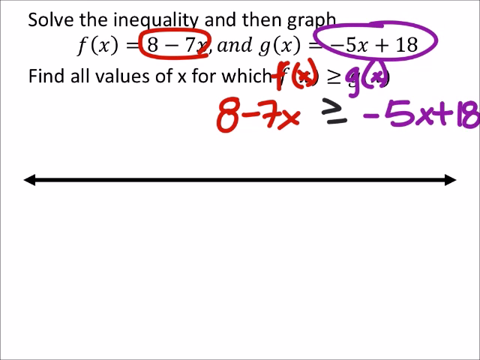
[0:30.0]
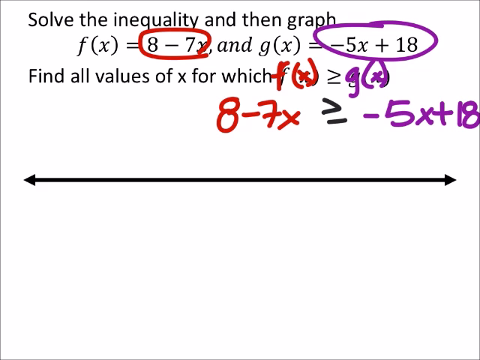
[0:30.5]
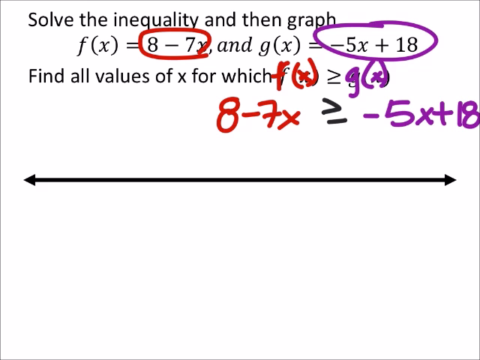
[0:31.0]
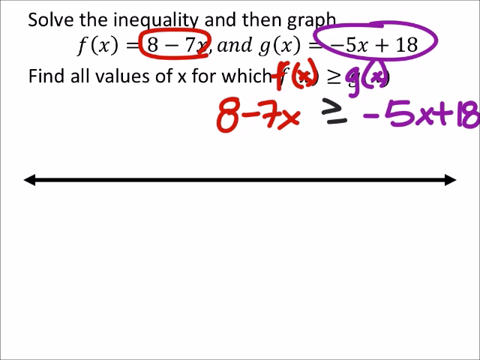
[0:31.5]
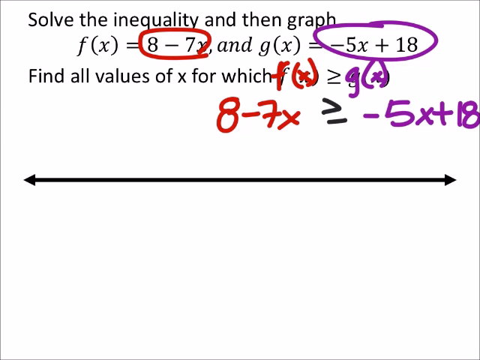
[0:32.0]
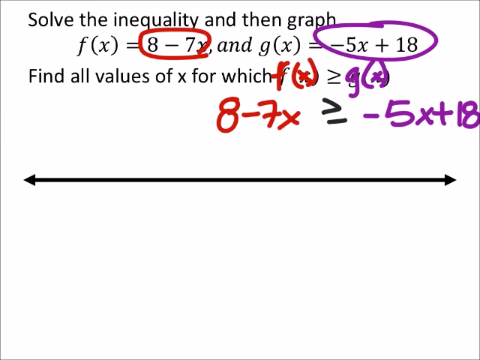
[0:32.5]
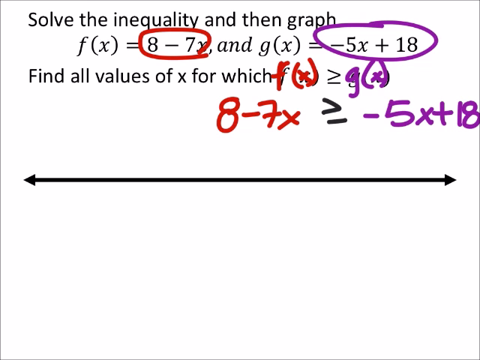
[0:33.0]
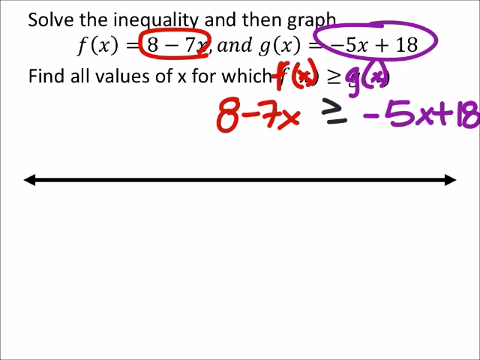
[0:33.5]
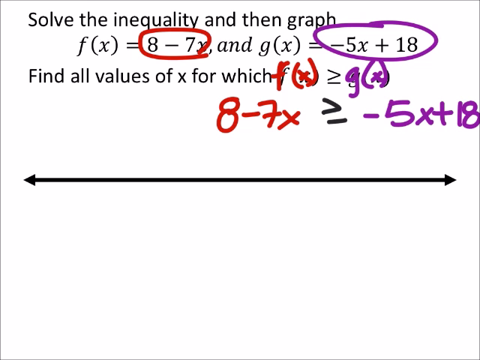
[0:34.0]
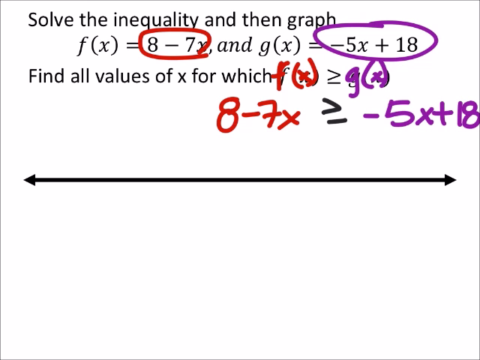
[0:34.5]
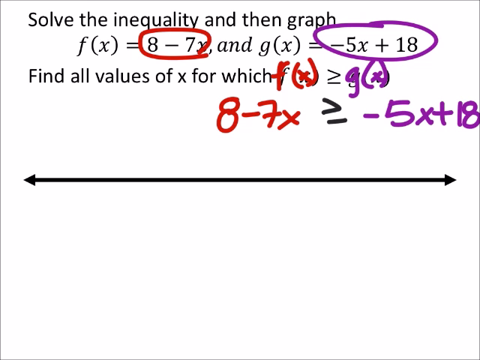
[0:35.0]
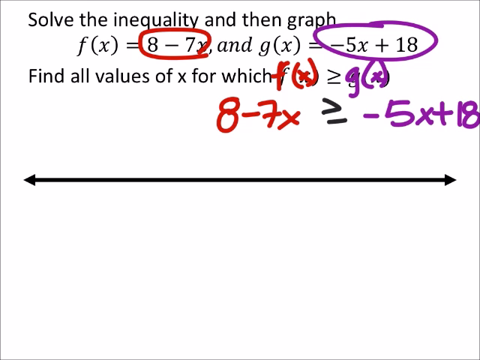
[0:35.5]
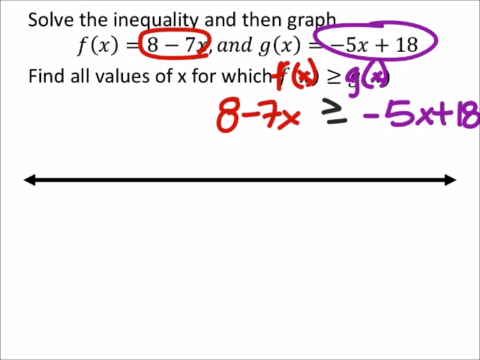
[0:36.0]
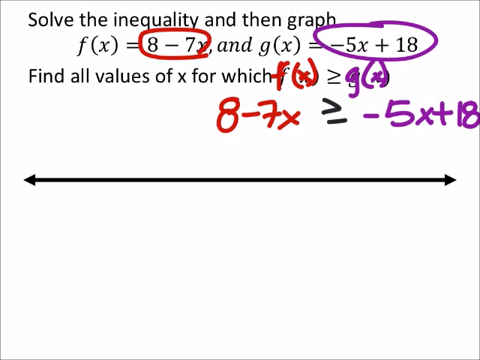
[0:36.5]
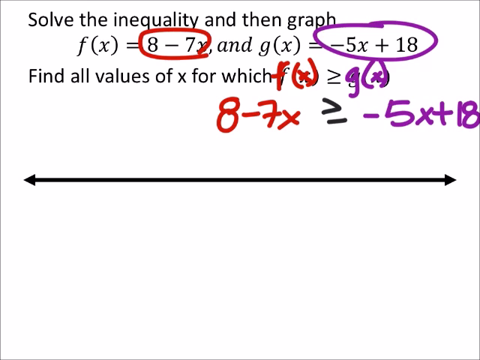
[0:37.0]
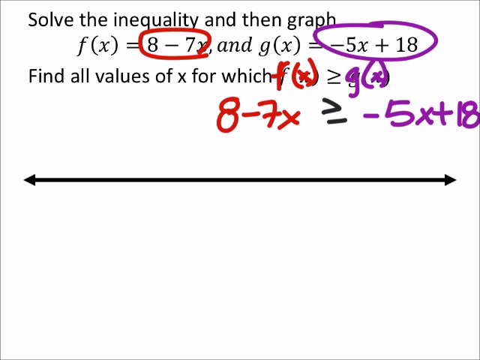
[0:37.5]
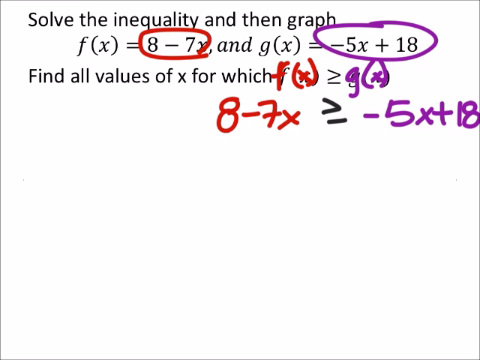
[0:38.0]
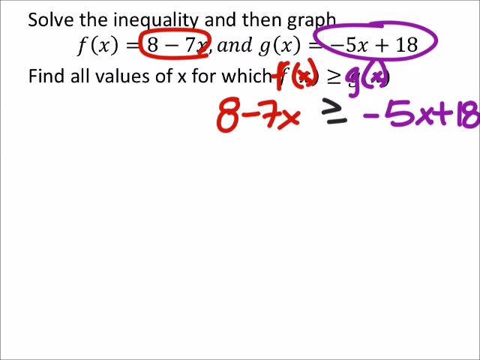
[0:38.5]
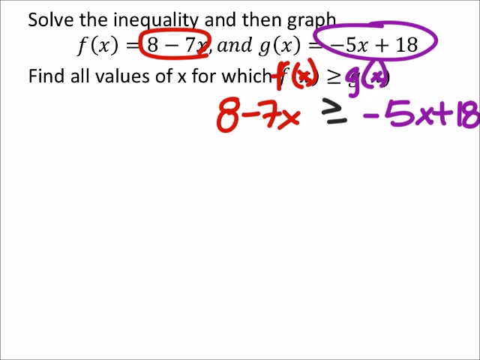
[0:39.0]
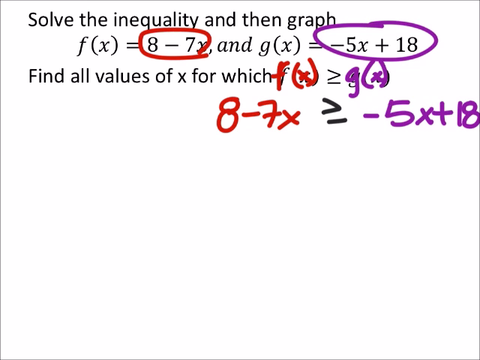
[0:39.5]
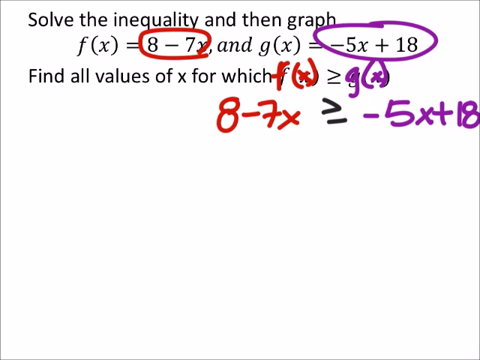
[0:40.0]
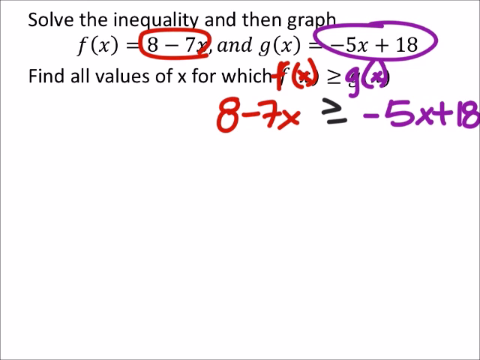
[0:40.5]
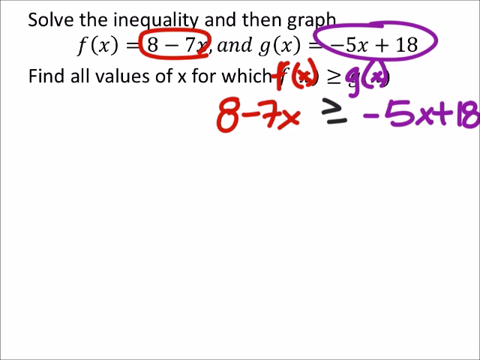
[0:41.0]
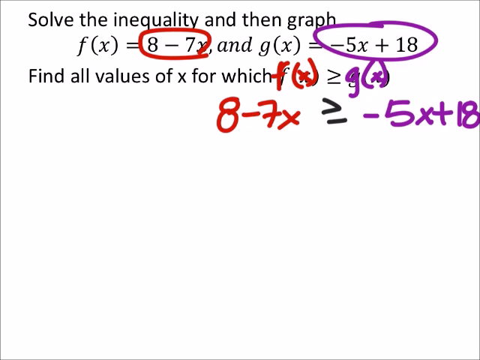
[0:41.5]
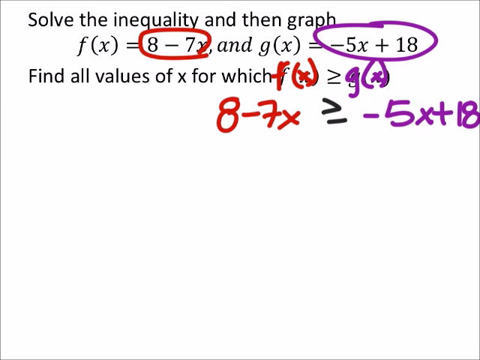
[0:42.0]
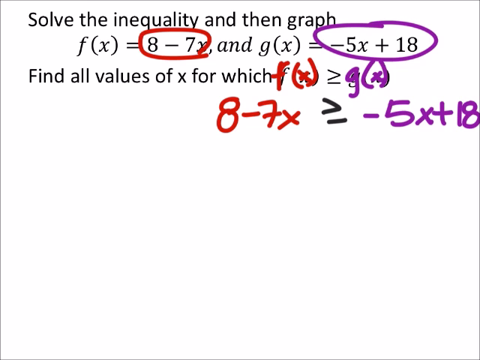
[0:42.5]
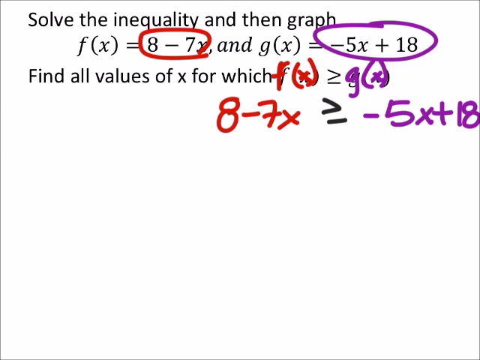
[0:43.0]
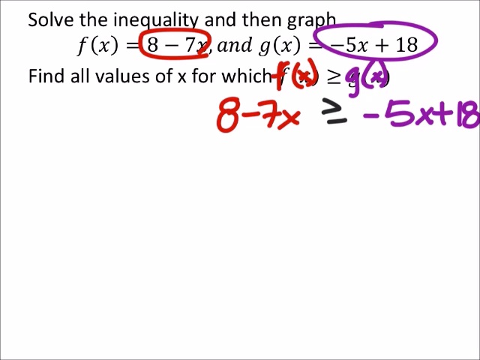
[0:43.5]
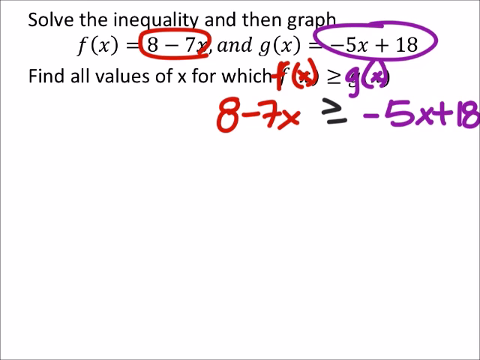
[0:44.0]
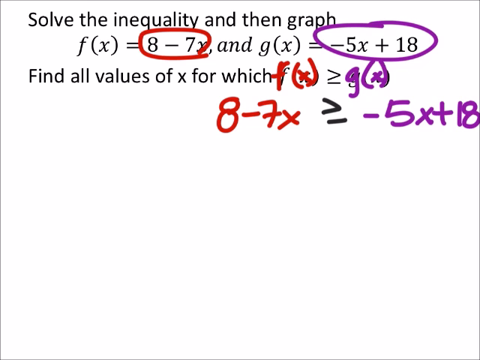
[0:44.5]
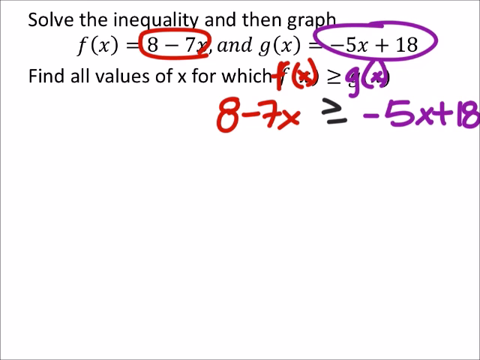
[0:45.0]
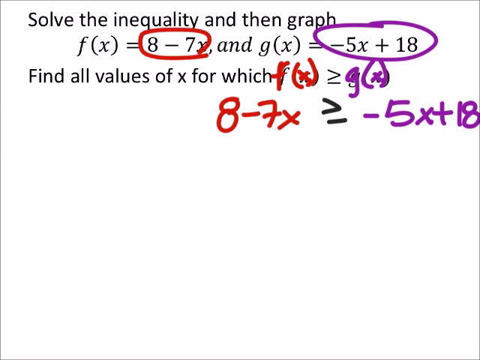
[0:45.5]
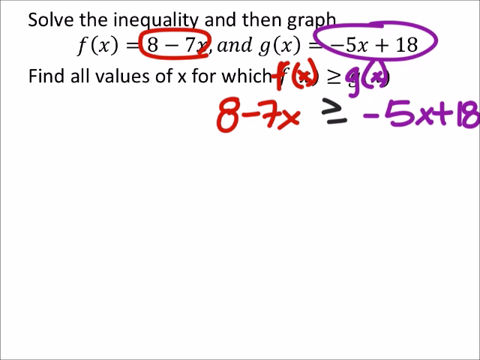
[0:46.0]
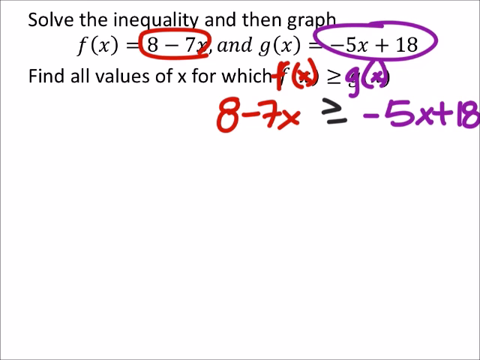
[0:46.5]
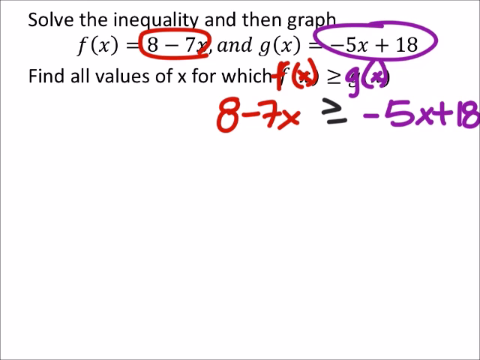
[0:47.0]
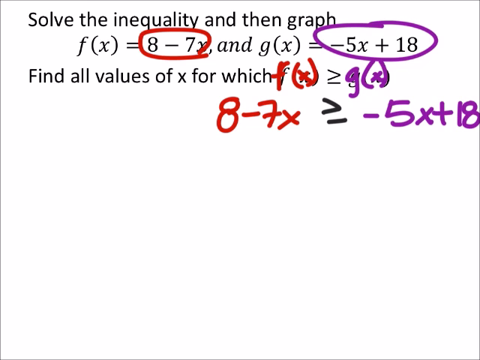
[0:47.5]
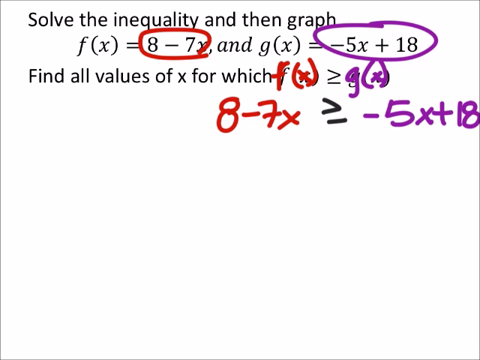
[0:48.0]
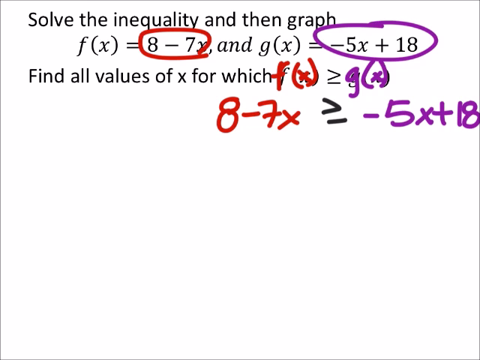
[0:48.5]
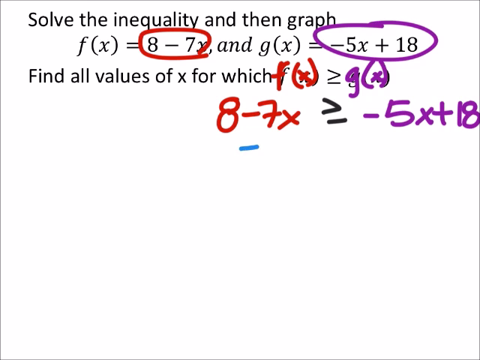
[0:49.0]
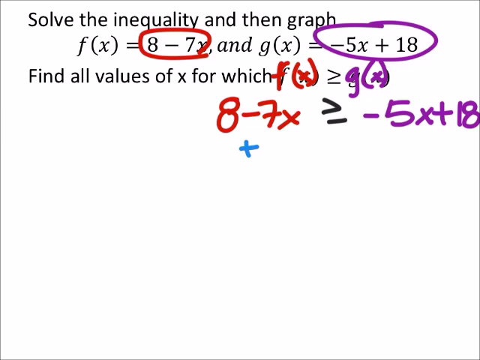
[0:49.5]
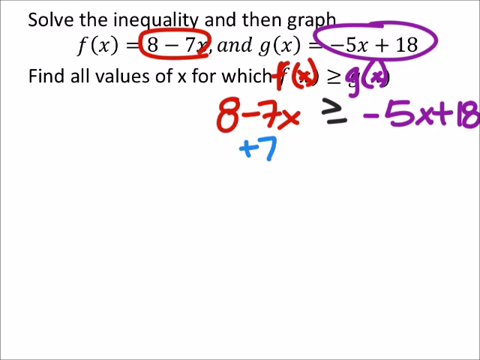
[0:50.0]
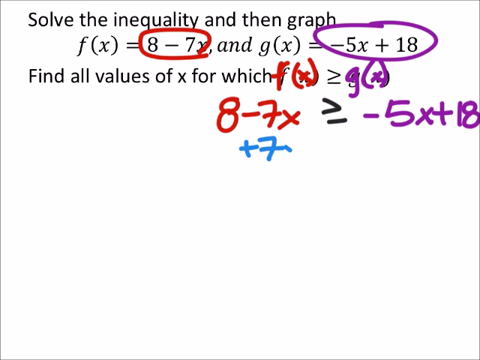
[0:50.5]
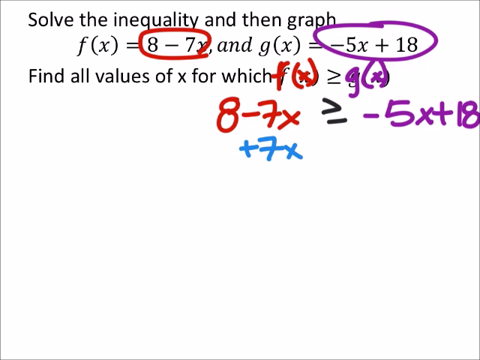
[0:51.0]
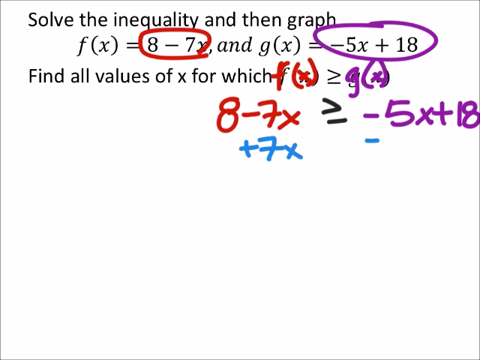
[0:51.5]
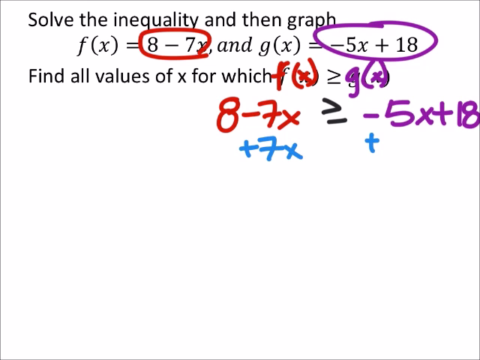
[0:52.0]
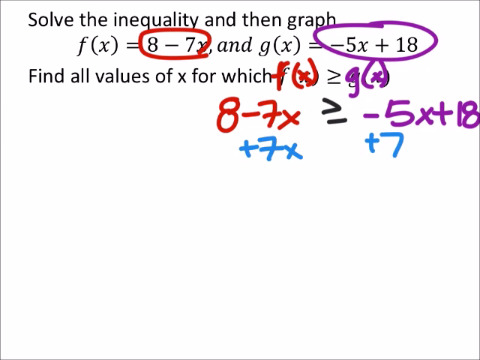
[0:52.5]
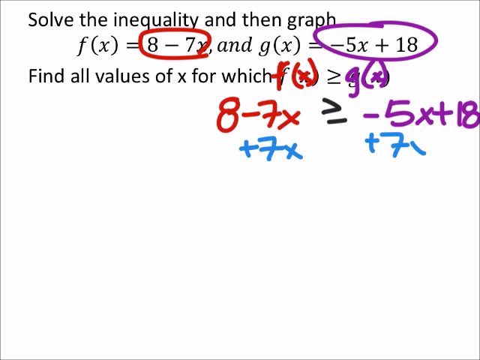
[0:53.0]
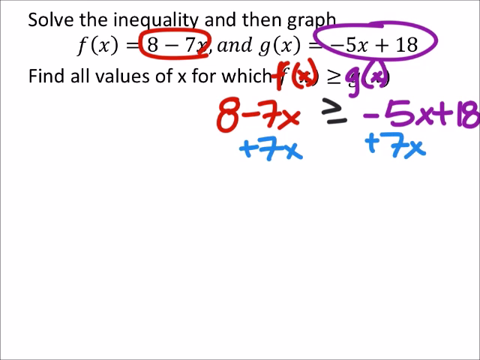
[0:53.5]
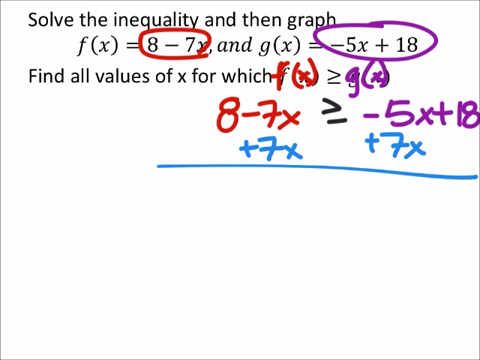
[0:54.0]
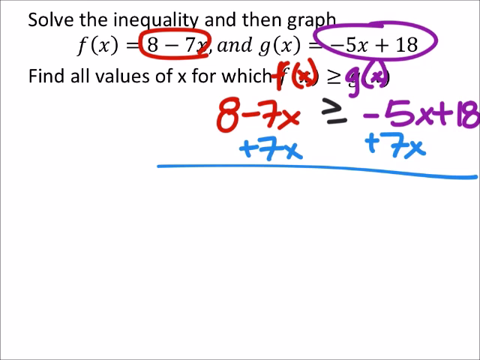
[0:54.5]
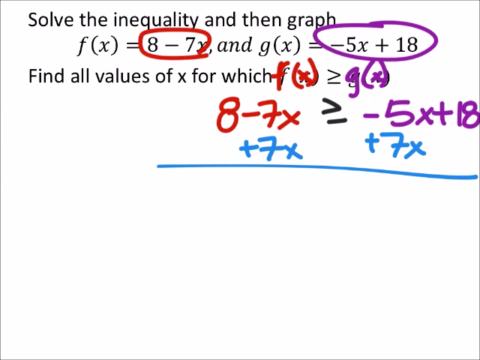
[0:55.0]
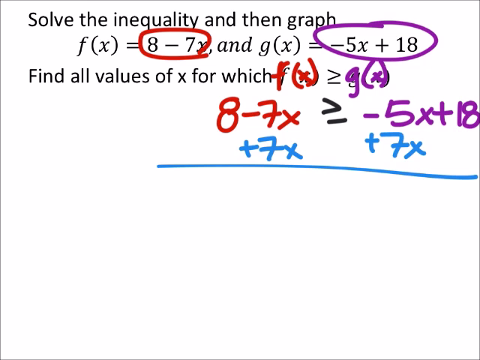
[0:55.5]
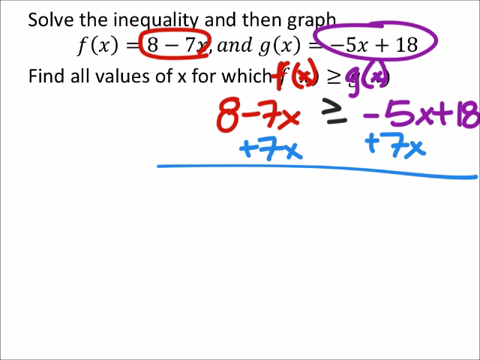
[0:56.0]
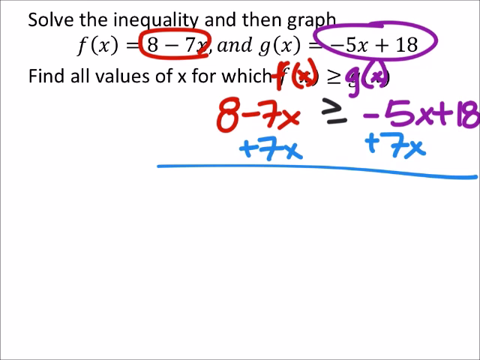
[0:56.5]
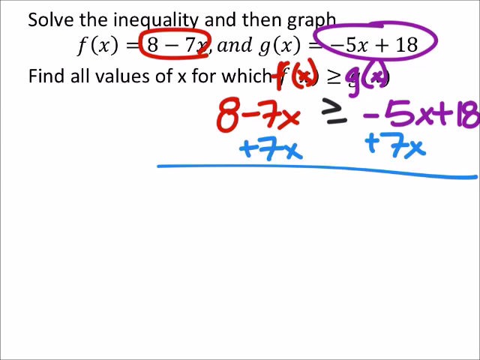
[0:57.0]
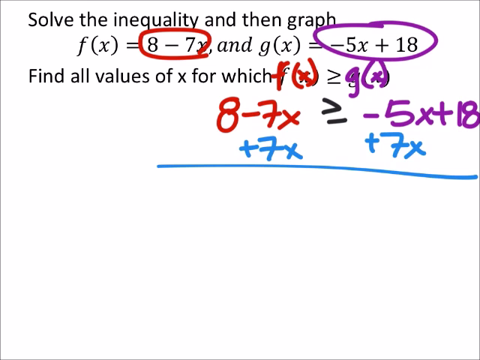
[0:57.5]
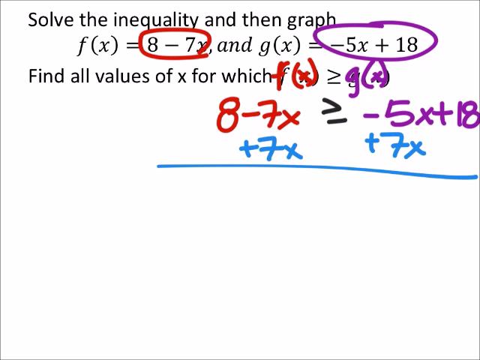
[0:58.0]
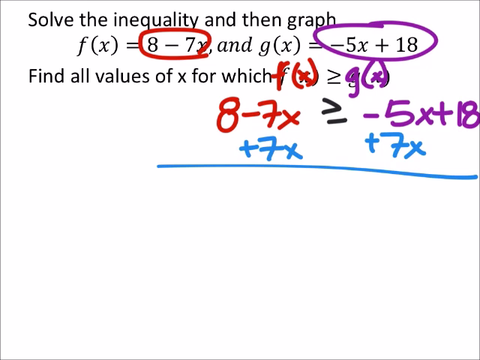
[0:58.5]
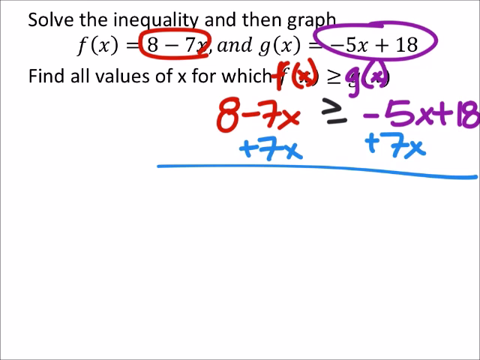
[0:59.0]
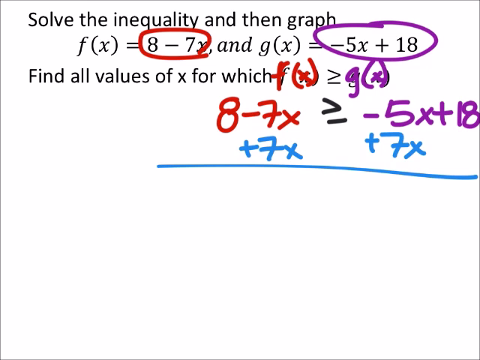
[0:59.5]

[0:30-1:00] The equation remains on the white screen with the markings drawn on top of it. Underneath the red 8 minus 7x, plus 7x is written in blue marker. On the right side, underneath the purple minus 5x plus 18, plus 7x is written as well. A blue line is then drawn underneath both blue plus 7x terms. The page with the equations, the instructions and the markings in different colors stays on screen until the end, when a blue line begins to be drawn down the center of the equation.